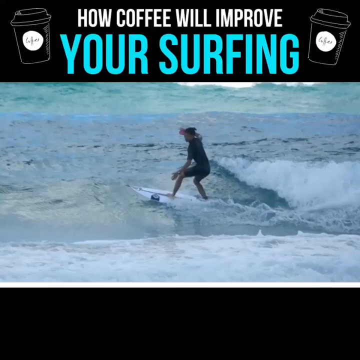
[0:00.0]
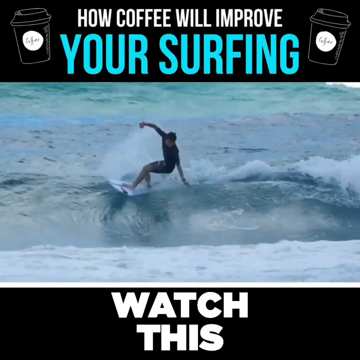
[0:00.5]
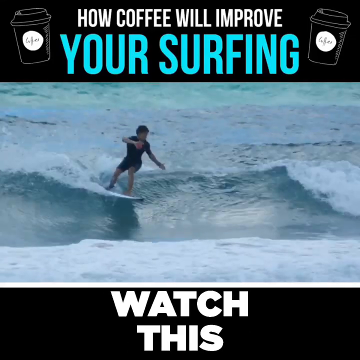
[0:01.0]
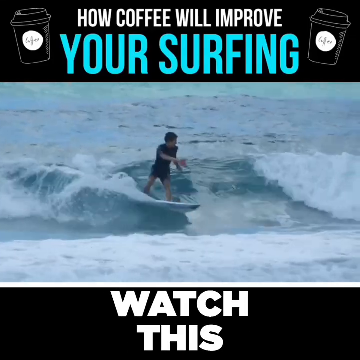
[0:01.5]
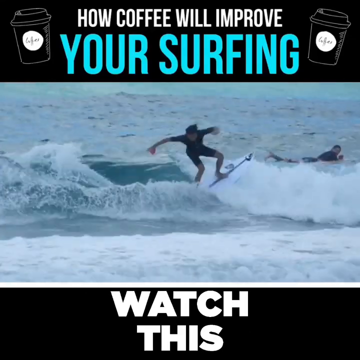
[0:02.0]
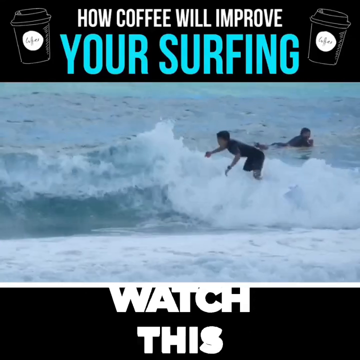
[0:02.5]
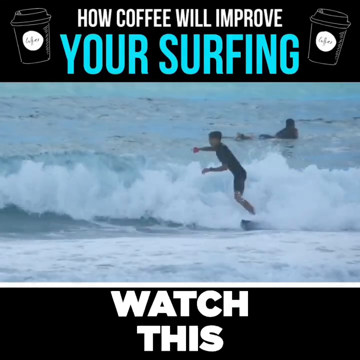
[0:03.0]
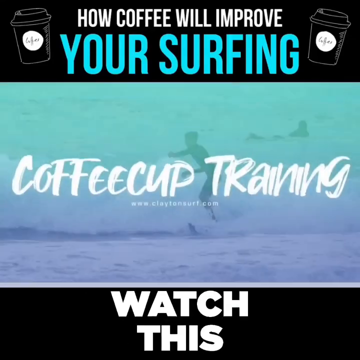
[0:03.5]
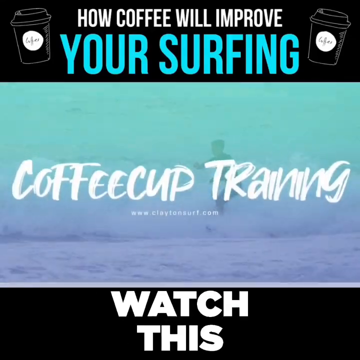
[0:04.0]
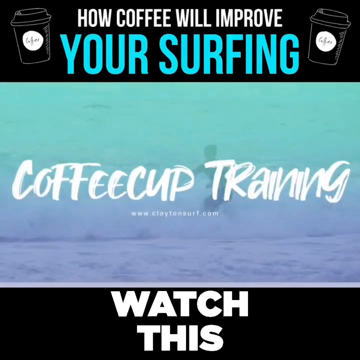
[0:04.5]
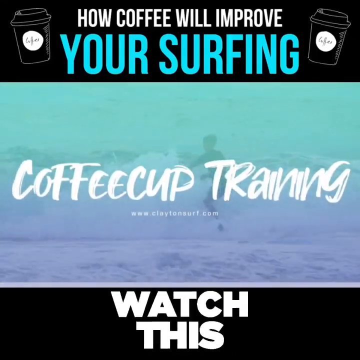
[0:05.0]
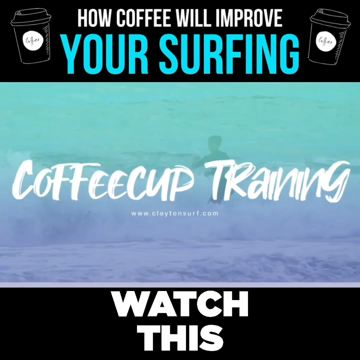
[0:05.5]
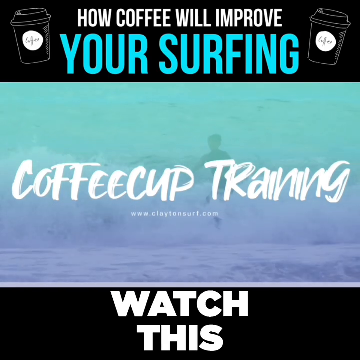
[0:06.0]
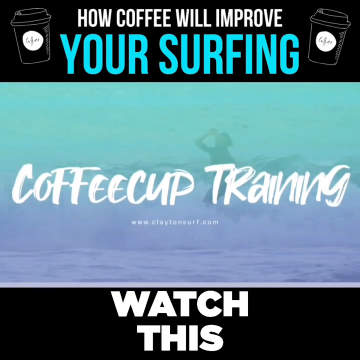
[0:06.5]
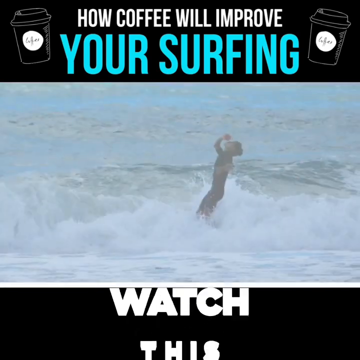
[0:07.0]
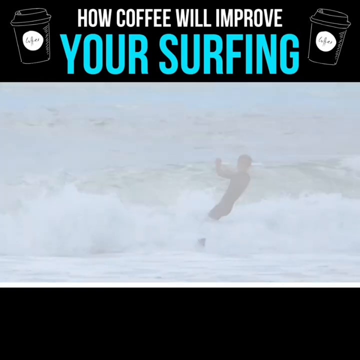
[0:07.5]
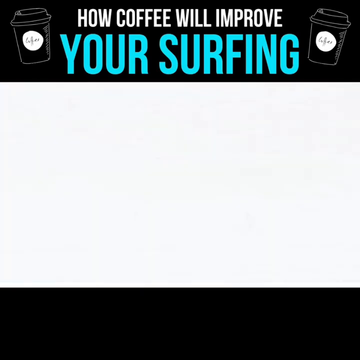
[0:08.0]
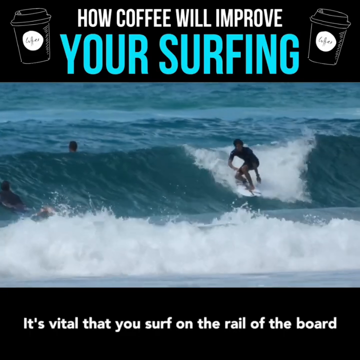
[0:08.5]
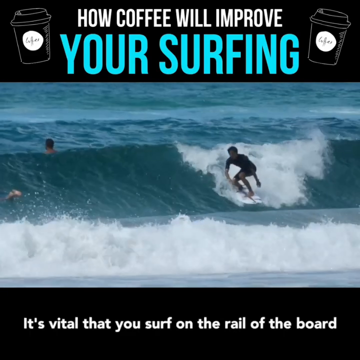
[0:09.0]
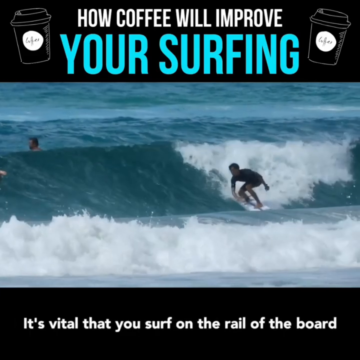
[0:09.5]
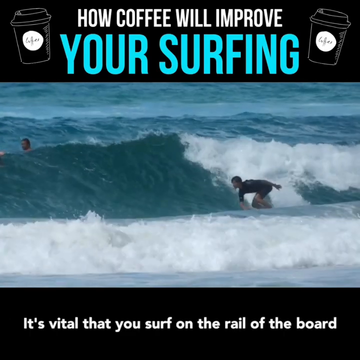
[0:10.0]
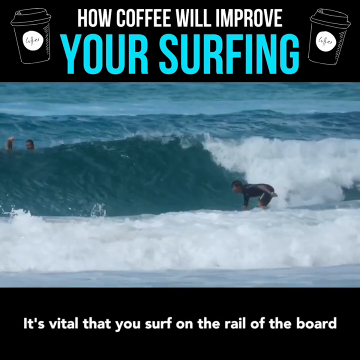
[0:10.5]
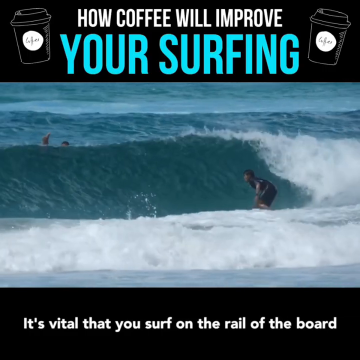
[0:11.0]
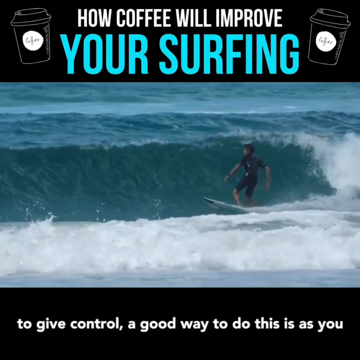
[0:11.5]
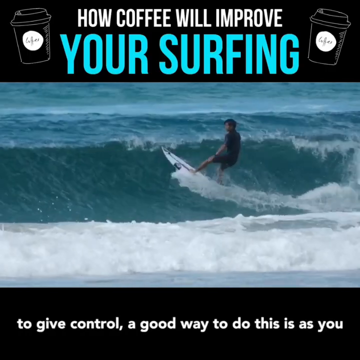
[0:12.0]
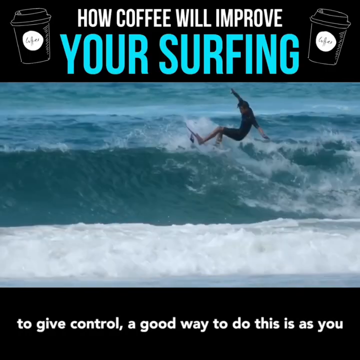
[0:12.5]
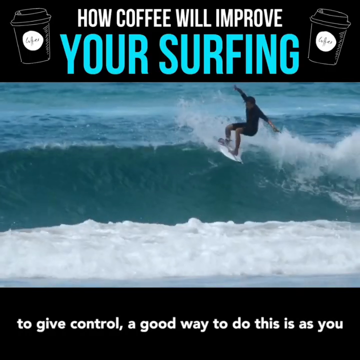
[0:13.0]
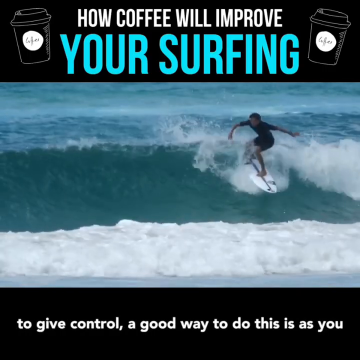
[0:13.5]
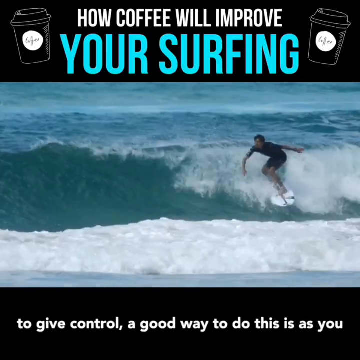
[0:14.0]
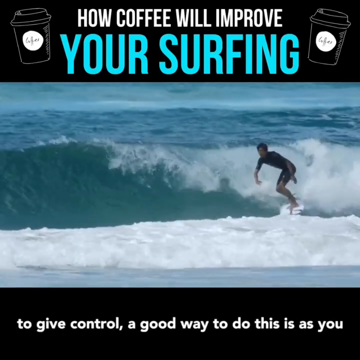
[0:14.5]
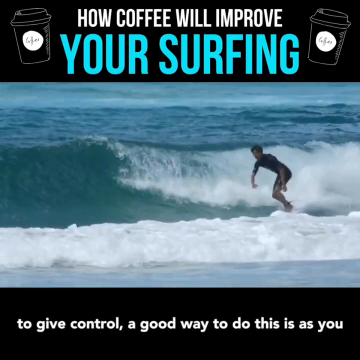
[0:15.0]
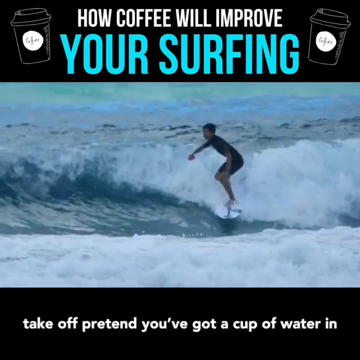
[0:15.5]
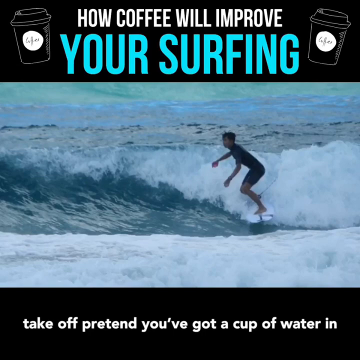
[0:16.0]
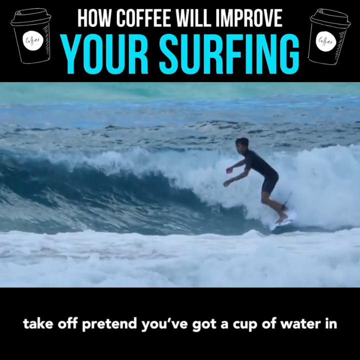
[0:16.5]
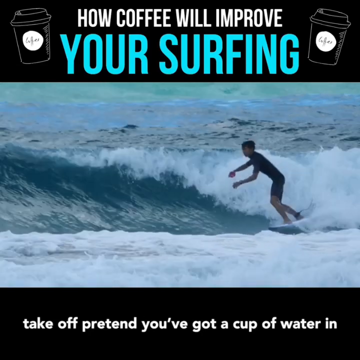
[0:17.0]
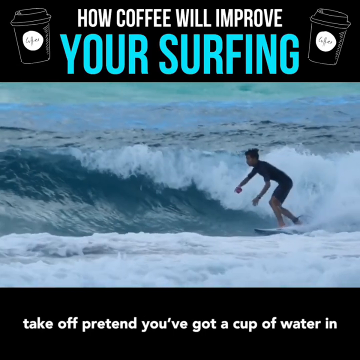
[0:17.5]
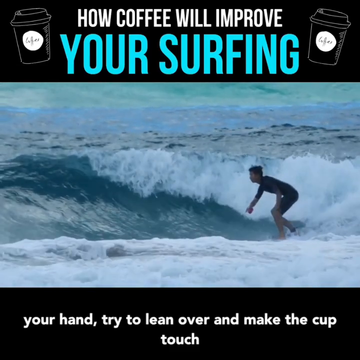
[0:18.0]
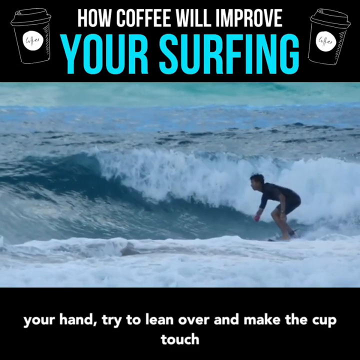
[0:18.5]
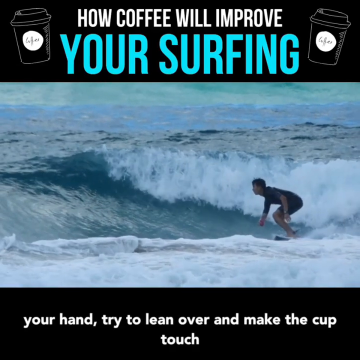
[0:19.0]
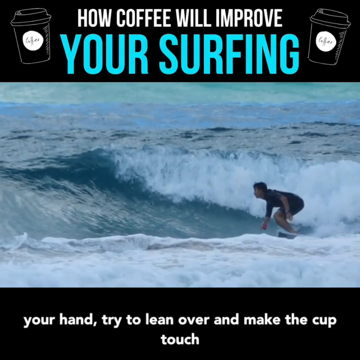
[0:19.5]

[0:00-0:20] The video opens with a horizontal clip placed in the middle of the frame, with large black margins above and below it. In the top black margin, white text reads "how coffee will improve", and underneath it light blue text reads "your surfing". On either side of this text is an illustration of a coffee cup, like a to-go cup from a store. In the bottom black margin, large white text reads "watch this" with an animation in which the words quickly grow bigger toward the screen, as if jumping up at the viewer; the animation repeats. The clip in the middle shows a man surfing in a close-up shot, so he is visible on the surfboard. The wave is quite small, and he begins heading toward the right of the screen. More words appear on the screen reading "coffee cup training", and the clip fades out to a white screen. Another clip follows of a man surfboarding in slower motion.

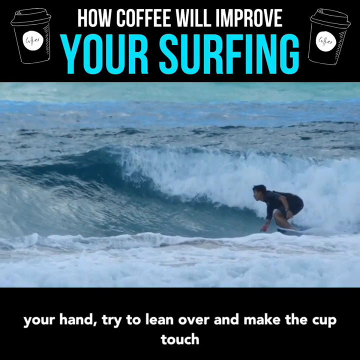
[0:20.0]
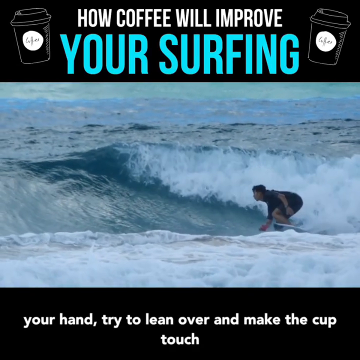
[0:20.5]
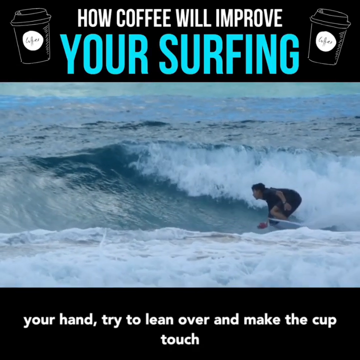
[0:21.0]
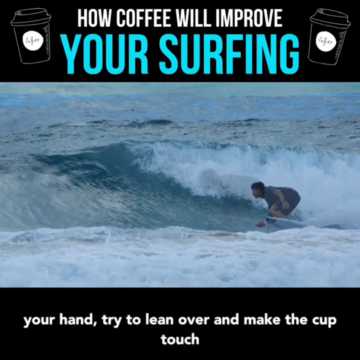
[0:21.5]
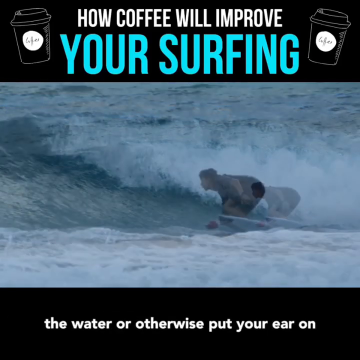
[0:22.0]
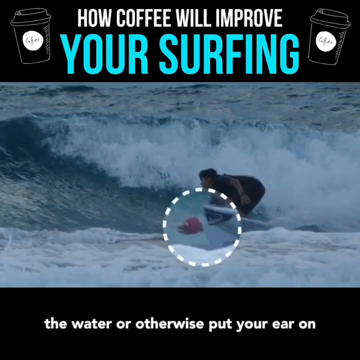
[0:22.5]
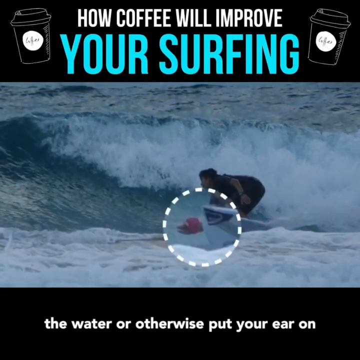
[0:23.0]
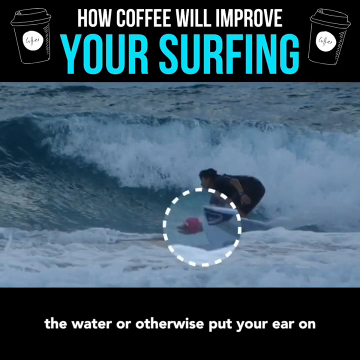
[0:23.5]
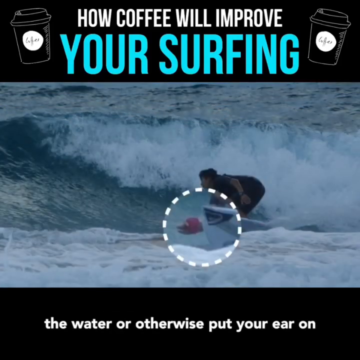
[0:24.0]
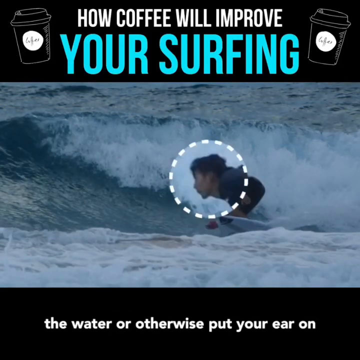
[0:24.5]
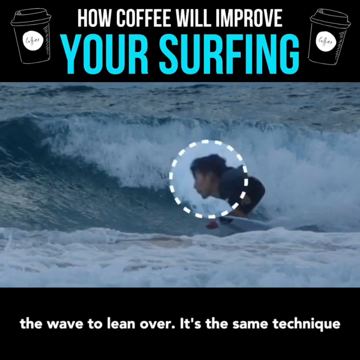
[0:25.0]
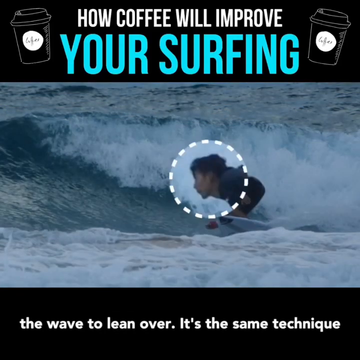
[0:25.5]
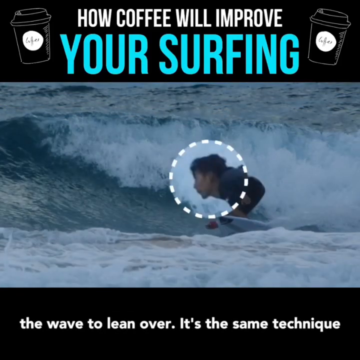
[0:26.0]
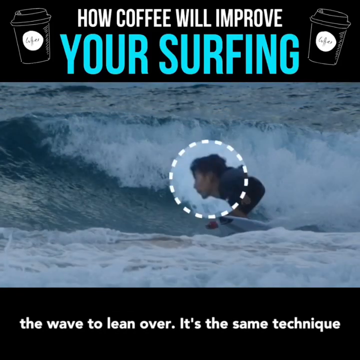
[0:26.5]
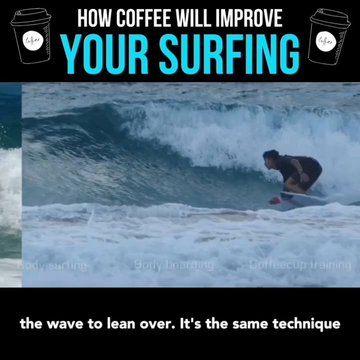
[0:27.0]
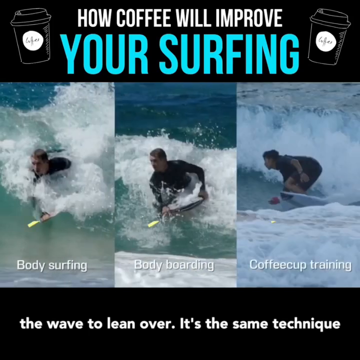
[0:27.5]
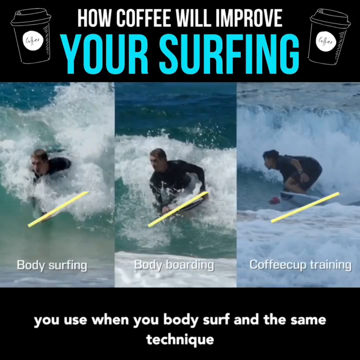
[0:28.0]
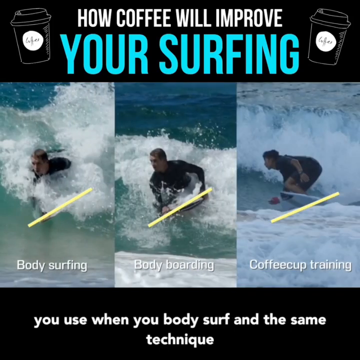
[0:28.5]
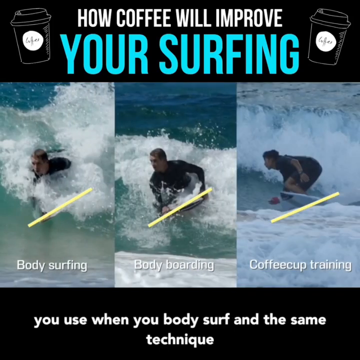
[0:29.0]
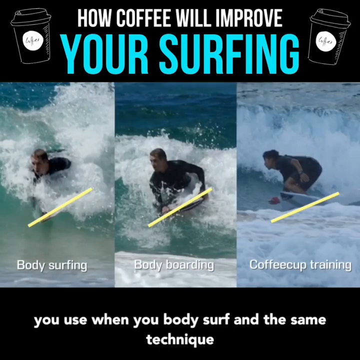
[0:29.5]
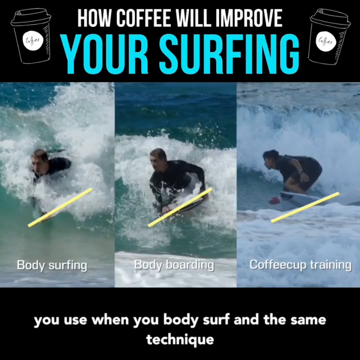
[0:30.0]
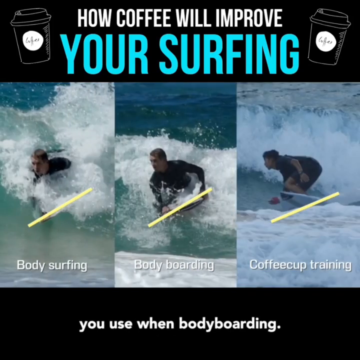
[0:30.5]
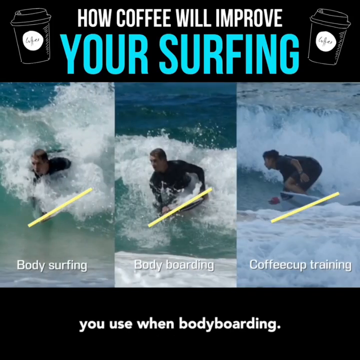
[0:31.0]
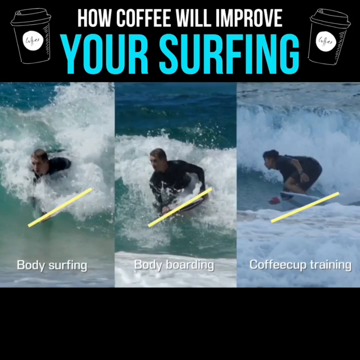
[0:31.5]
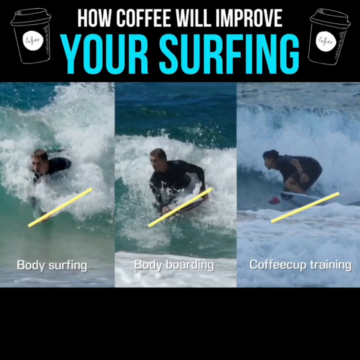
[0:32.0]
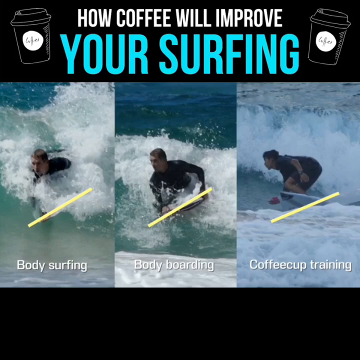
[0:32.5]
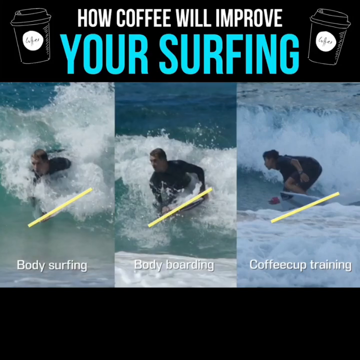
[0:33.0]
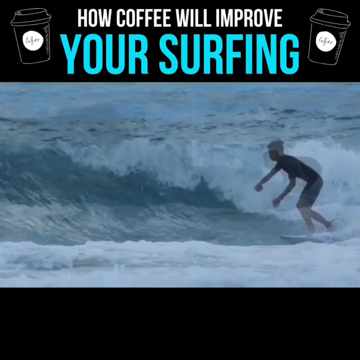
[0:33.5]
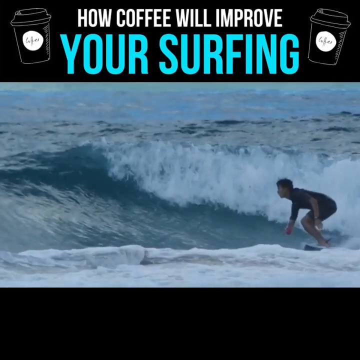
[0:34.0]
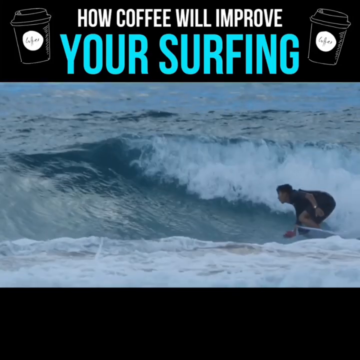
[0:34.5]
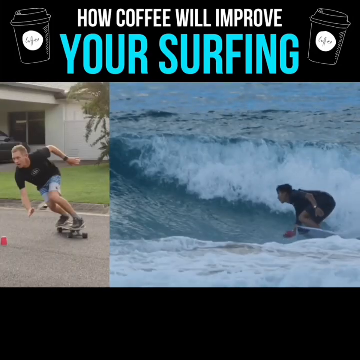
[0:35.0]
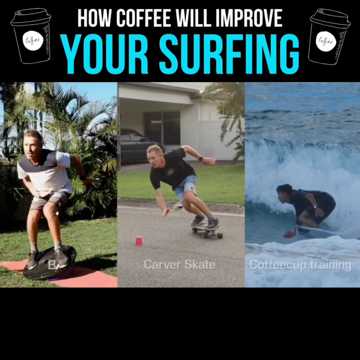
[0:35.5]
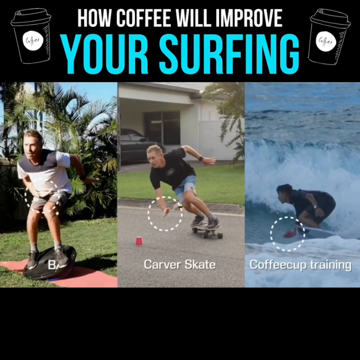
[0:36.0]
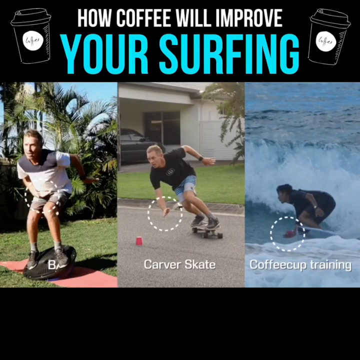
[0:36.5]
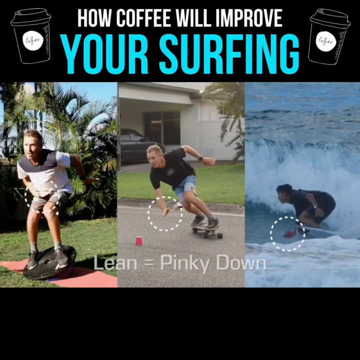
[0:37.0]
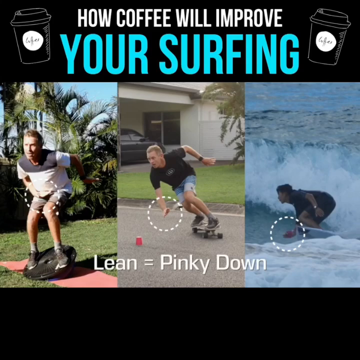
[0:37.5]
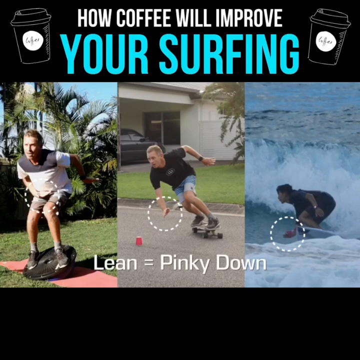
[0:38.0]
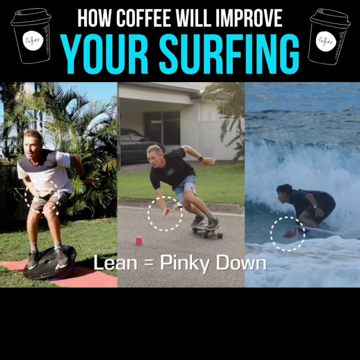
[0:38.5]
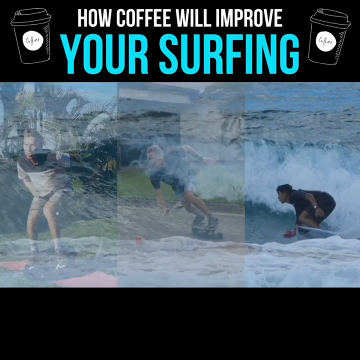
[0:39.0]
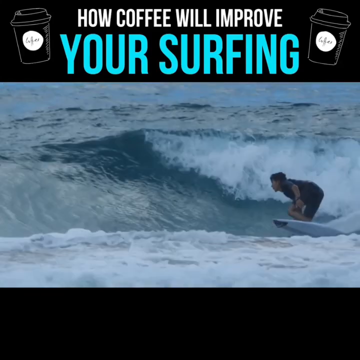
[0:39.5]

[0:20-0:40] The text at the top still reads "how coffee will improve your surfing" in white and blue, with the two coffee cup illustrations at the sides. Subtitles begin to appear in the bottom black margin. In the middle, the surfer is in a crouch position at the bottom of the wave, about to move back up. The footage is in slow motion; it then pauses and zooms in closer to the man. A white circle outlined with dashed white lines appears on a portion of his surfboard; the inside of the circle is clearer than the rest of the image, which has been darkened. The circle then moves upward to the surfer's face, showing a zoomed-in view of it. Two side-by-side images then enter the frame and join the original footage; they all move toward the right, leaving three pictures next to each other.